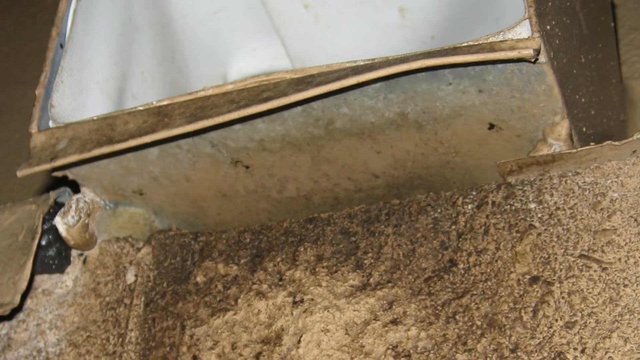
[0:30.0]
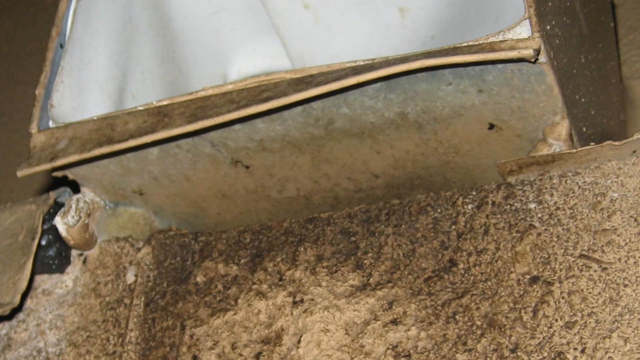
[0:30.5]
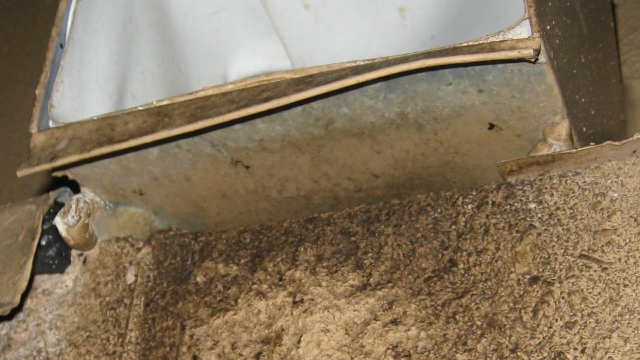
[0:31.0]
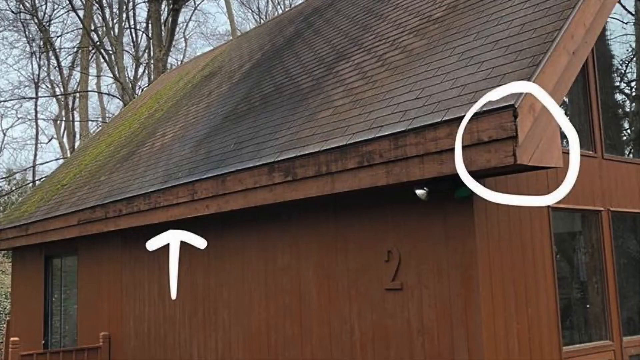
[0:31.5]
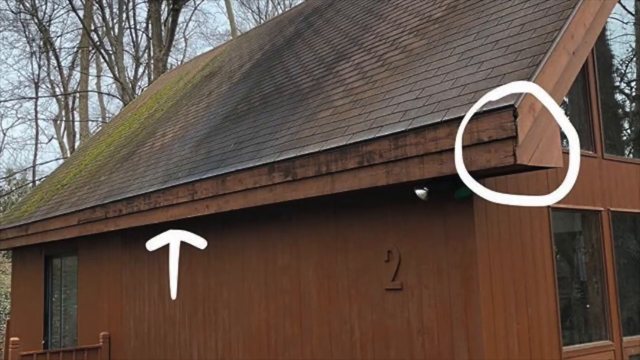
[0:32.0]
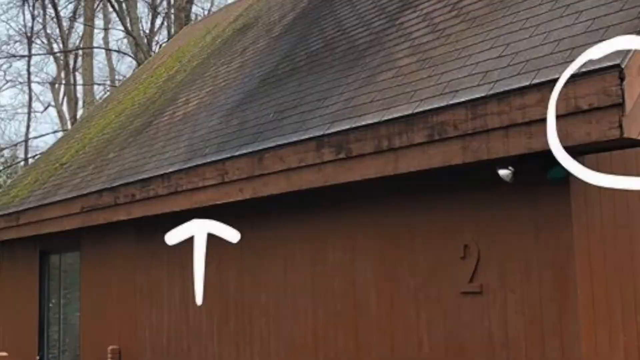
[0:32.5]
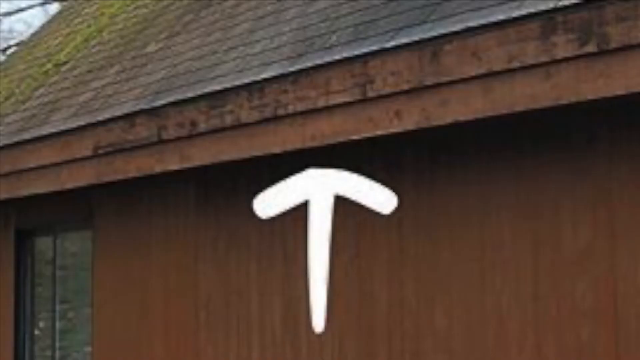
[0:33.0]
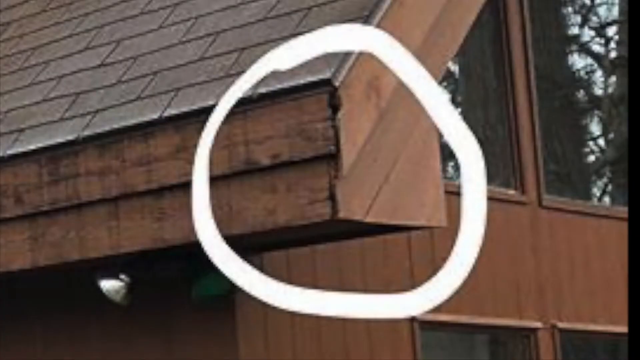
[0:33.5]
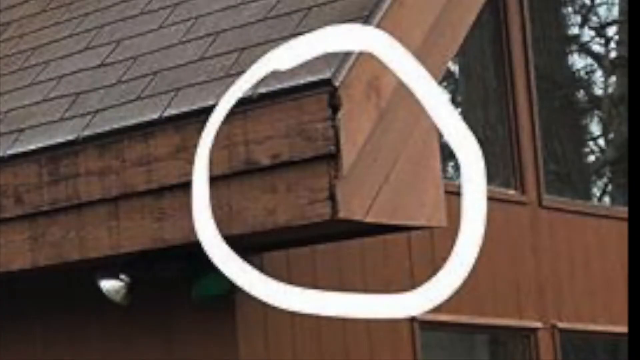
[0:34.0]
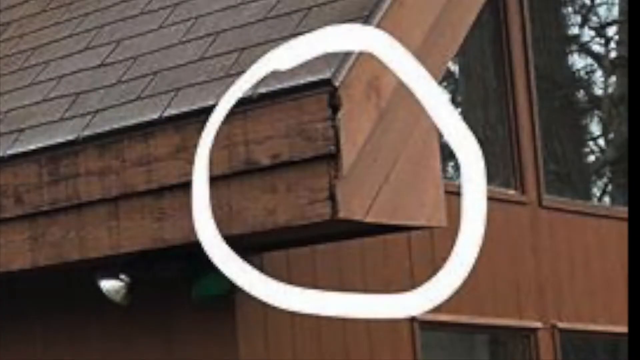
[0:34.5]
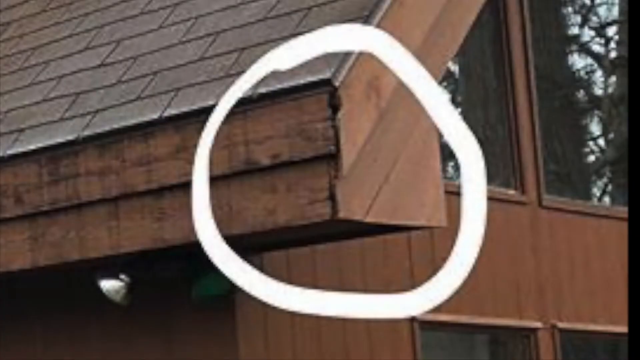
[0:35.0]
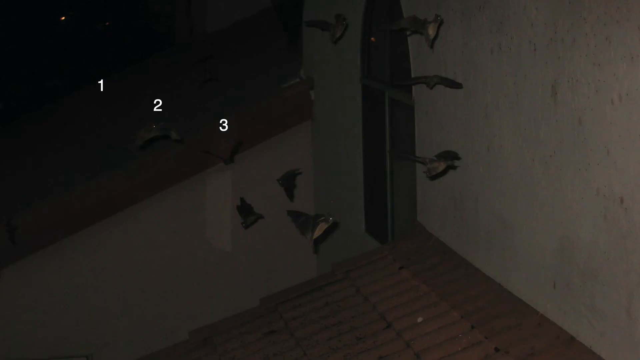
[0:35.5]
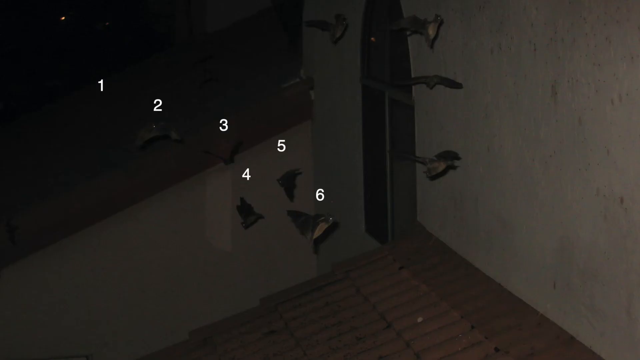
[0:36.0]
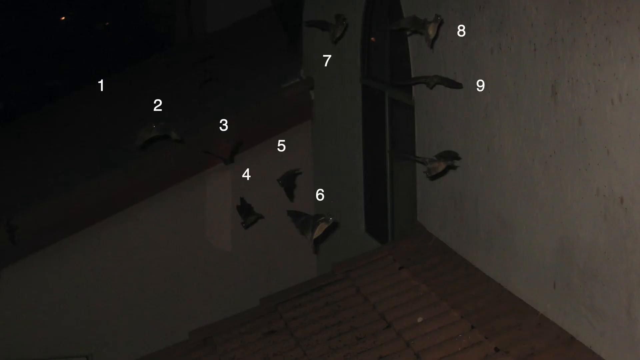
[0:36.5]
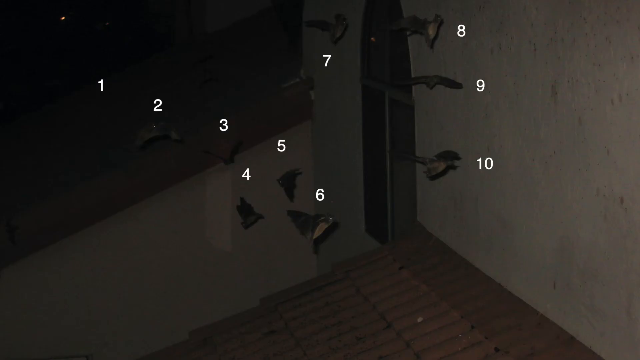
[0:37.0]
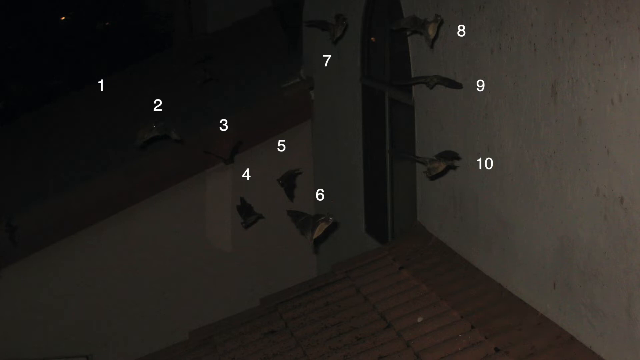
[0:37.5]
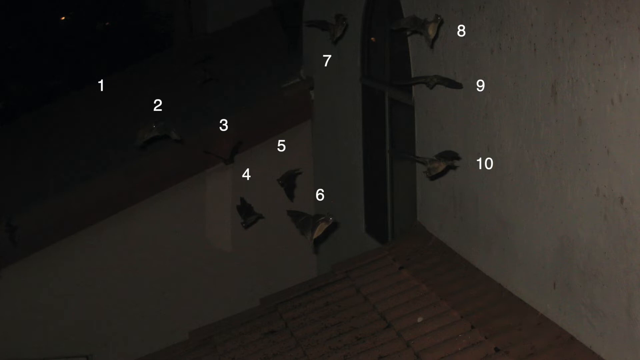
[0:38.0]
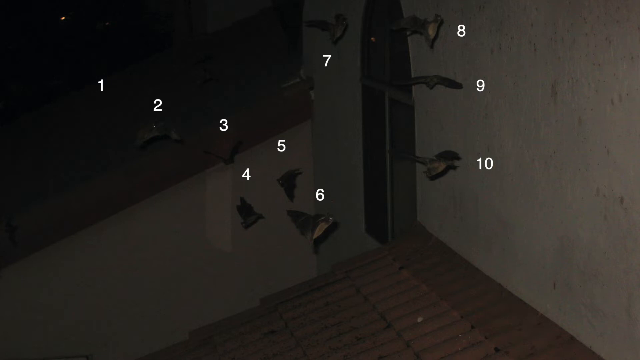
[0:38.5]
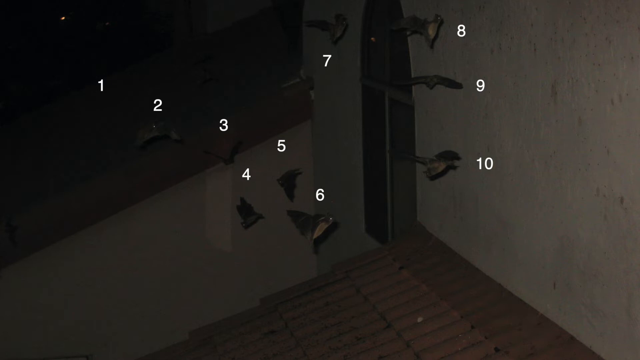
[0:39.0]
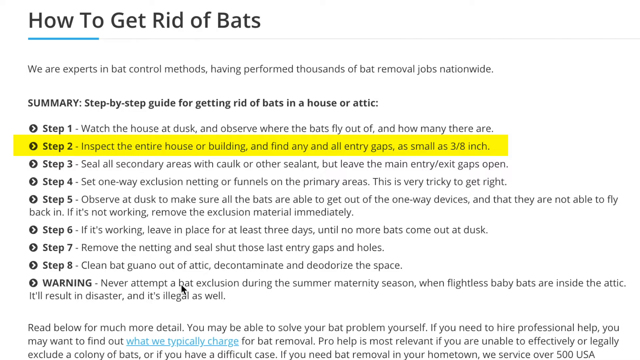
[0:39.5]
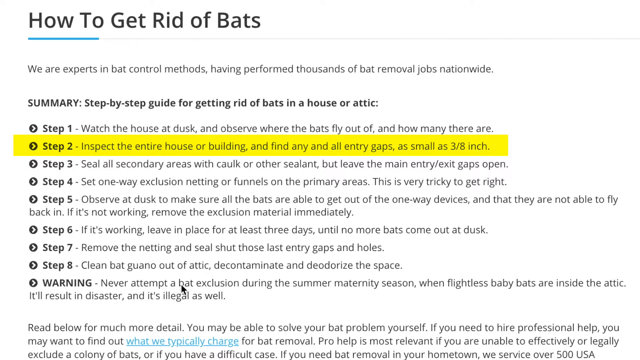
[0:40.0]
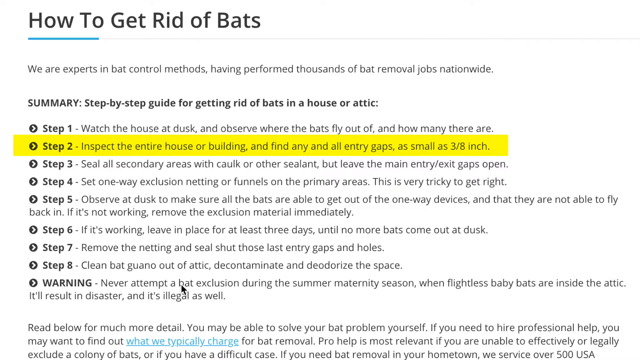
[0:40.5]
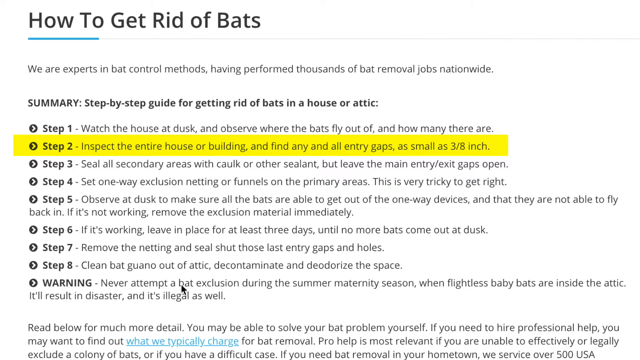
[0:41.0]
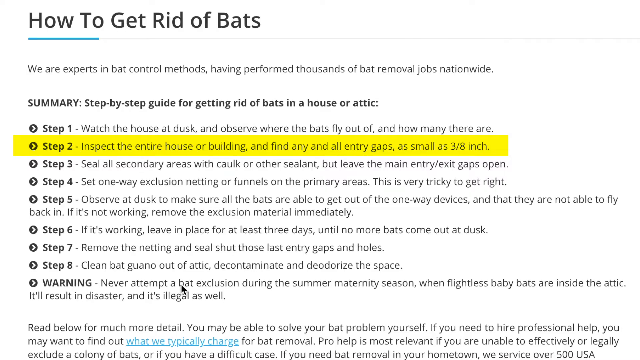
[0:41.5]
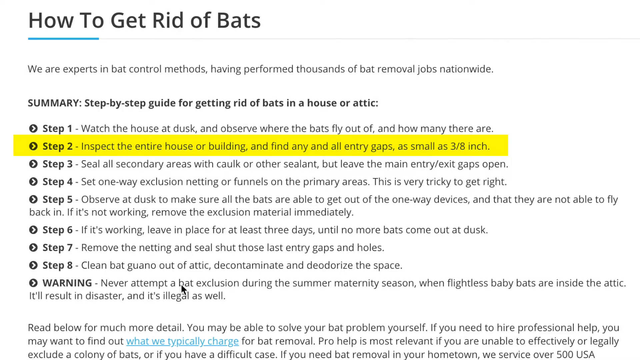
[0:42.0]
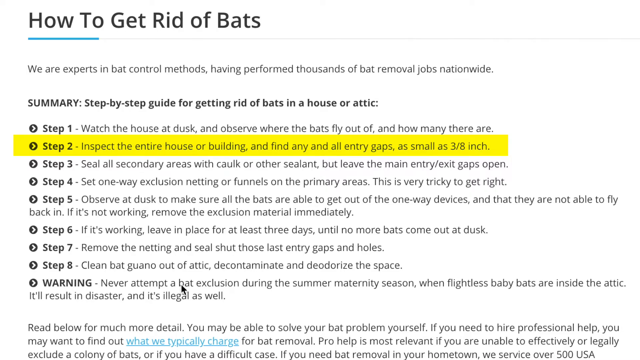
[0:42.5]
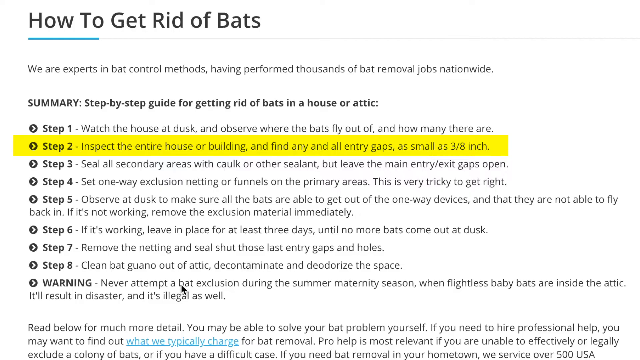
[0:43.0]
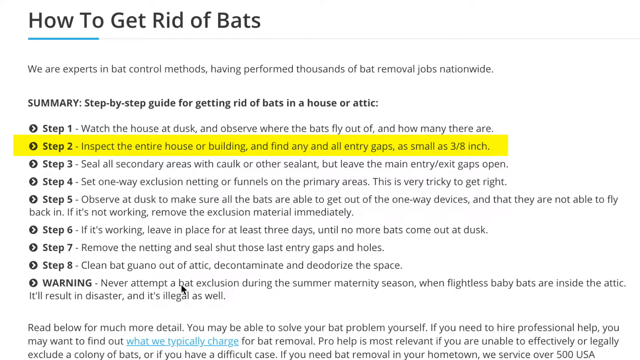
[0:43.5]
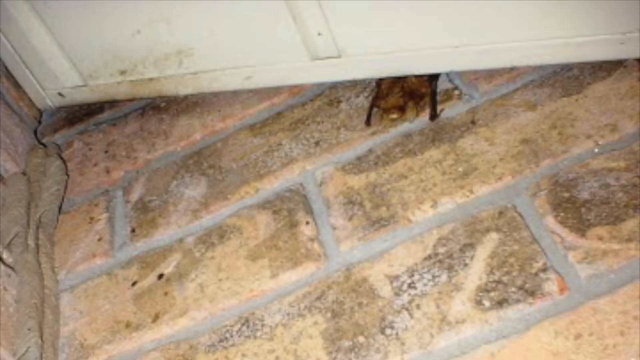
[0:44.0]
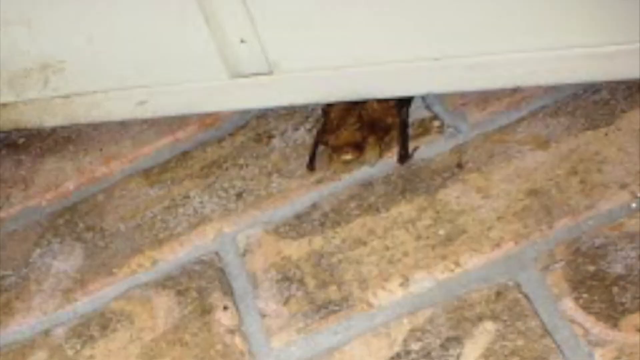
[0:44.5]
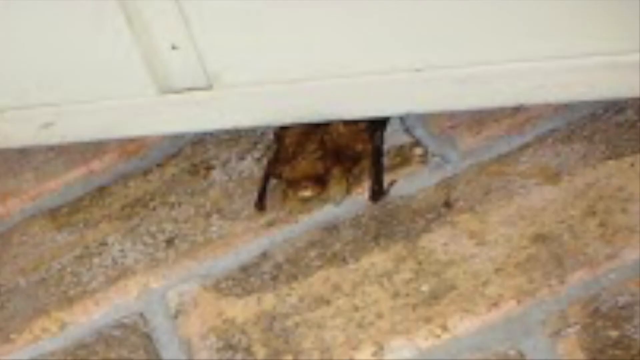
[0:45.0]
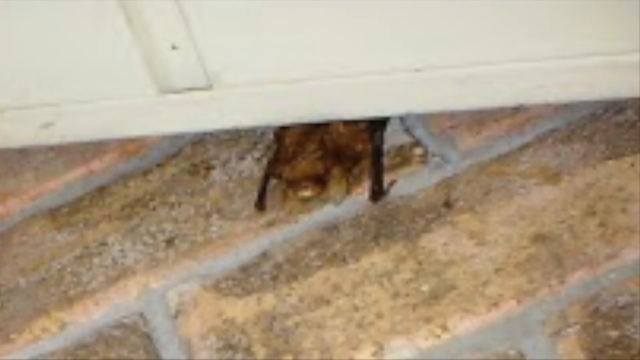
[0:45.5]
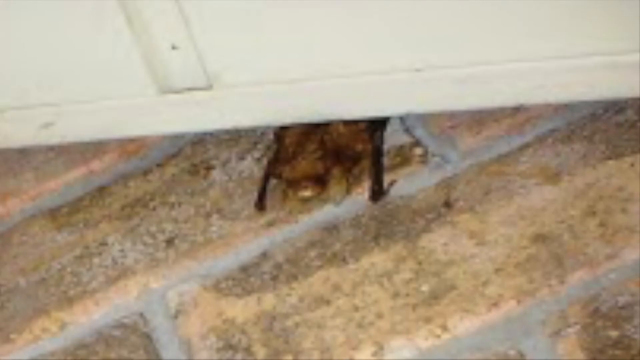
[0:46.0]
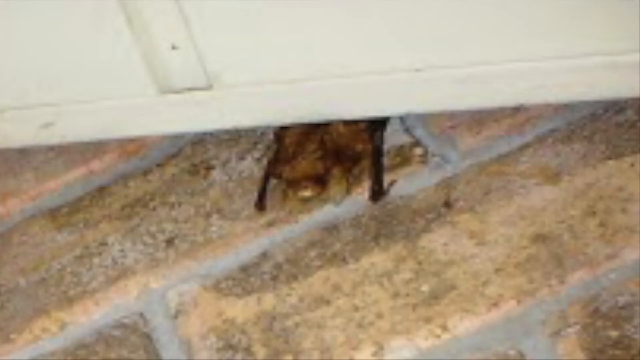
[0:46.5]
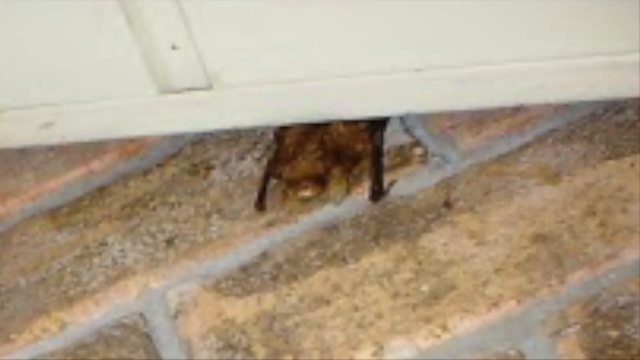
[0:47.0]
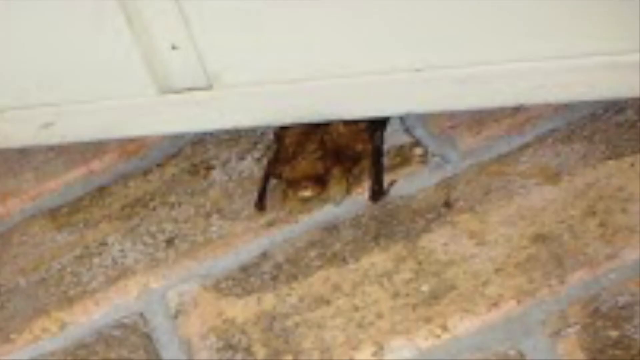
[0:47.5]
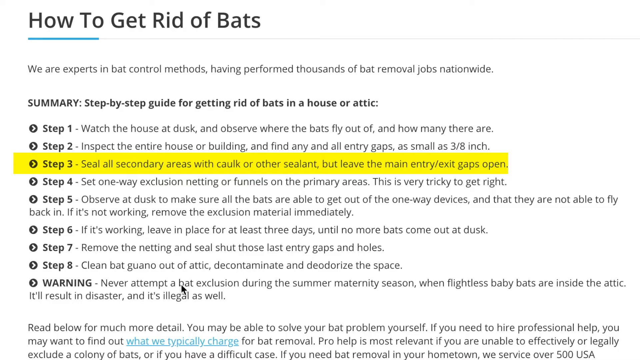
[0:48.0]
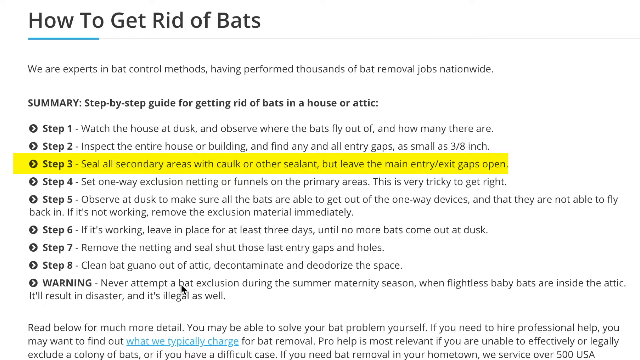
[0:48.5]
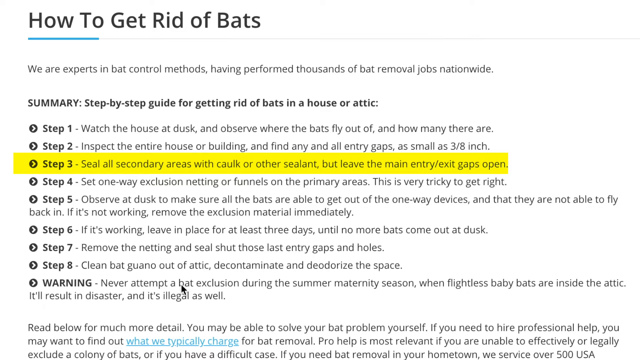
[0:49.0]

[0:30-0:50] Bats have gotten underneath the soffit of a roof. A very large, thick white arrow points to the exact space where they have gotten under, and a big white circle surrounds the corner where the gutter meets the edge of the roof. A very dark picture shows the numbers 1 through 10; it looks like the bats are being numbered, though they can't be seen because it is dark, and a corner with some wood is visible. The how to get rid of bats article is a step-by-step guide for getting rid of bats in a house or attic, with steps 1 through 8, the last being a warning to never attempt a bat exclusion during the summer maternity season. On the brick siding of a house there is a brown bat with black legs, halfway underneath a white section of the house. The house is a brown A-frame with a number two on the side and large glass windows.